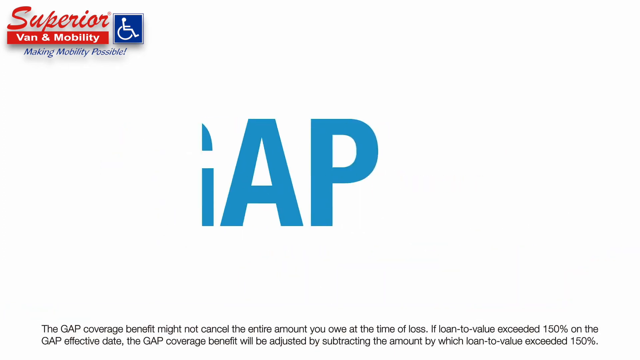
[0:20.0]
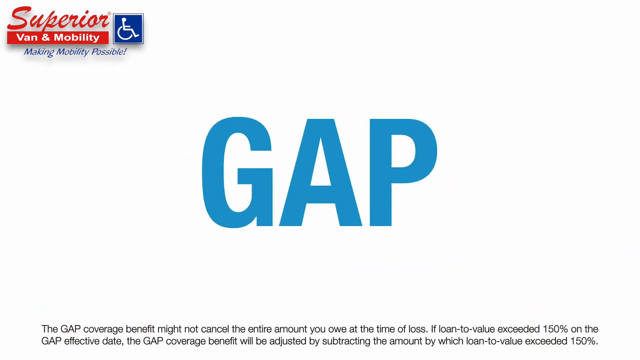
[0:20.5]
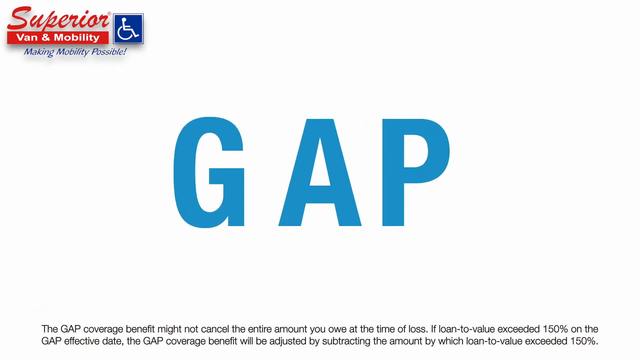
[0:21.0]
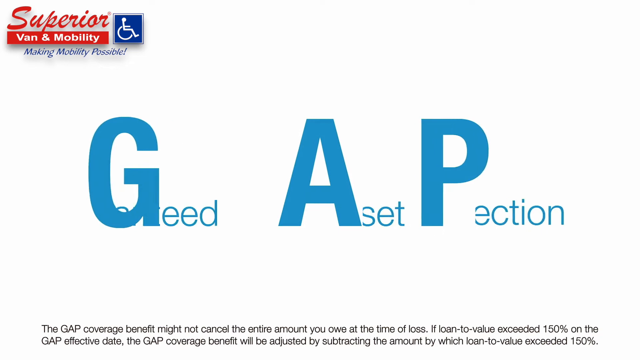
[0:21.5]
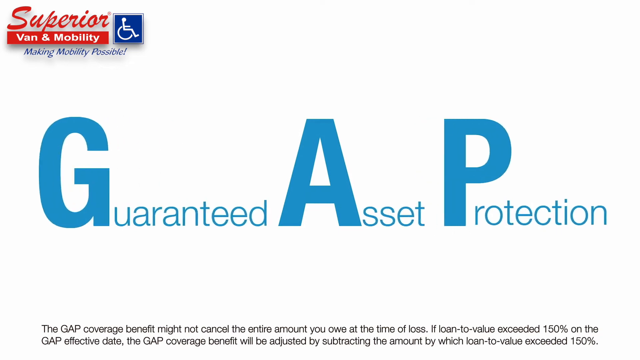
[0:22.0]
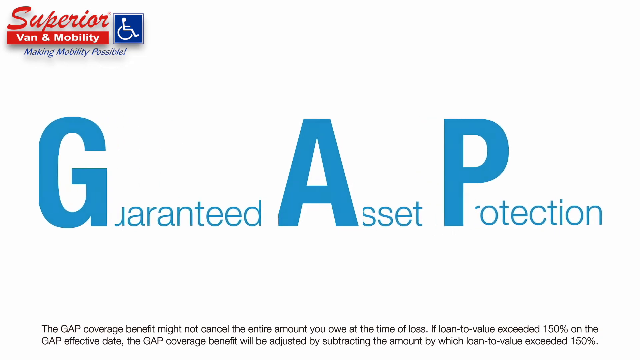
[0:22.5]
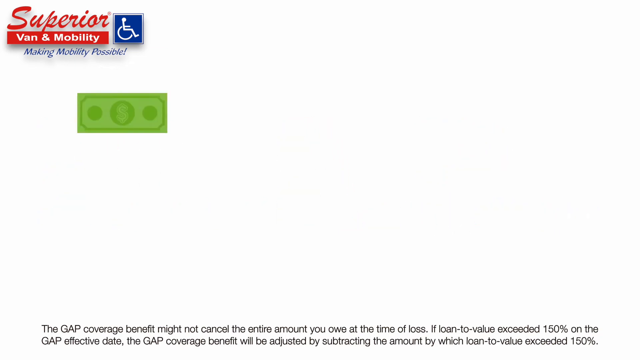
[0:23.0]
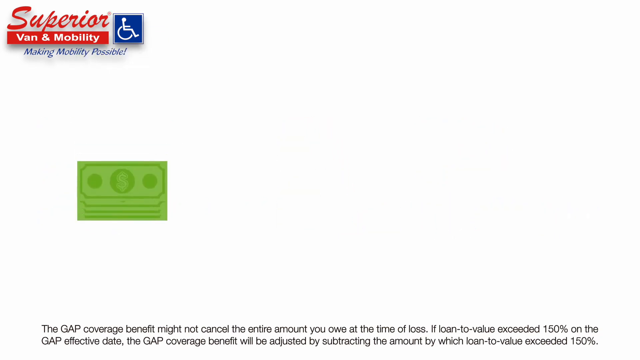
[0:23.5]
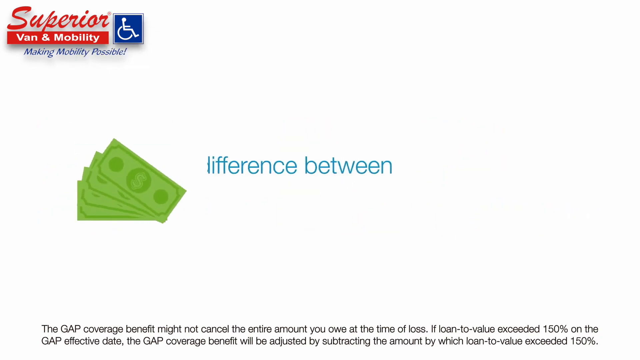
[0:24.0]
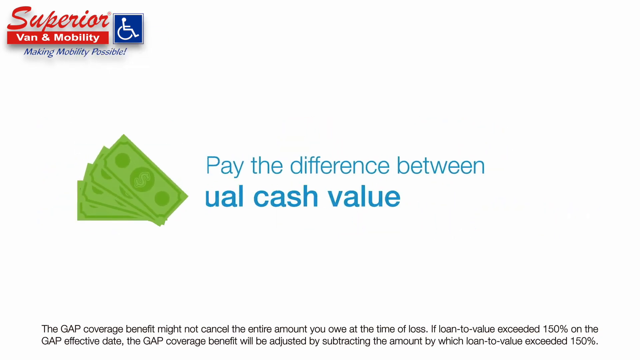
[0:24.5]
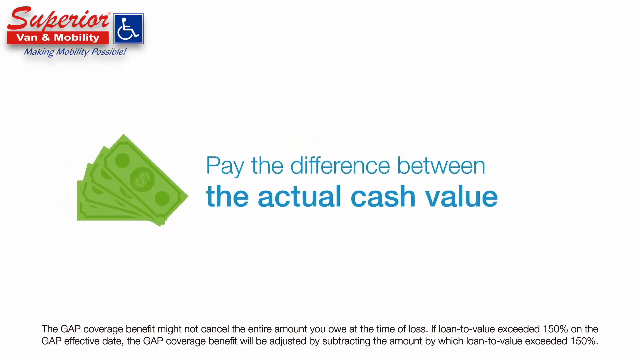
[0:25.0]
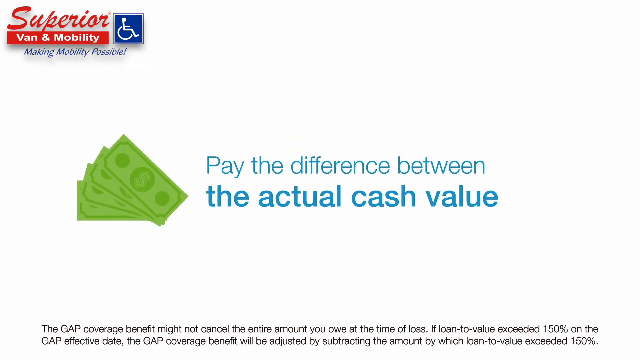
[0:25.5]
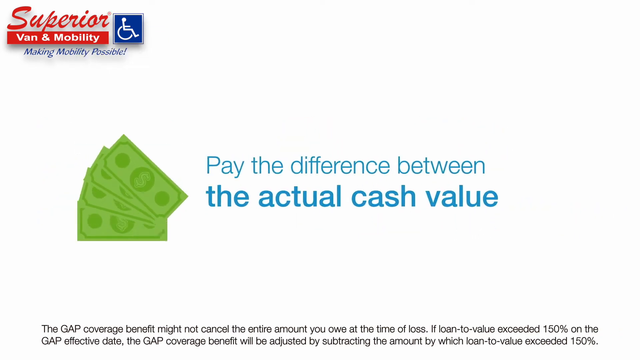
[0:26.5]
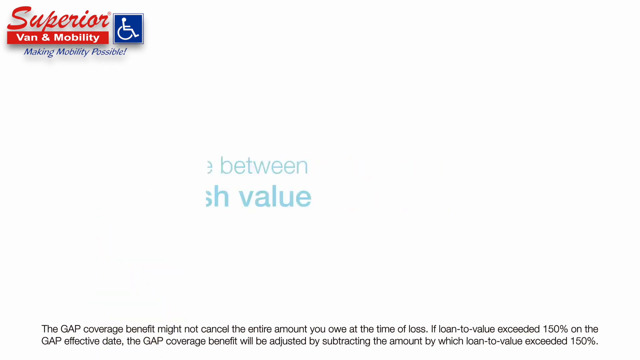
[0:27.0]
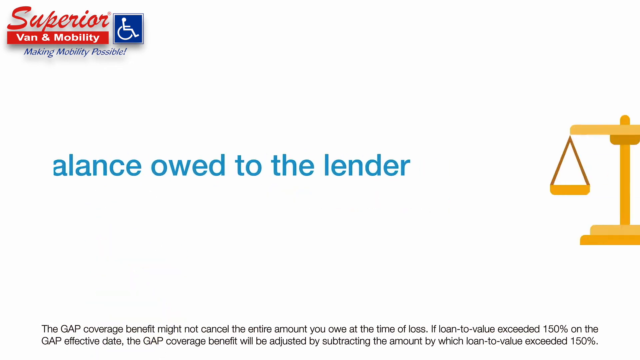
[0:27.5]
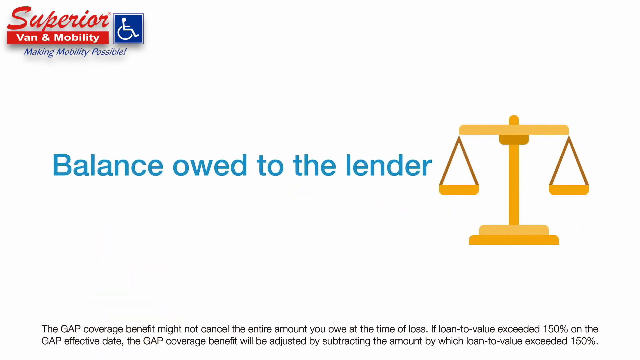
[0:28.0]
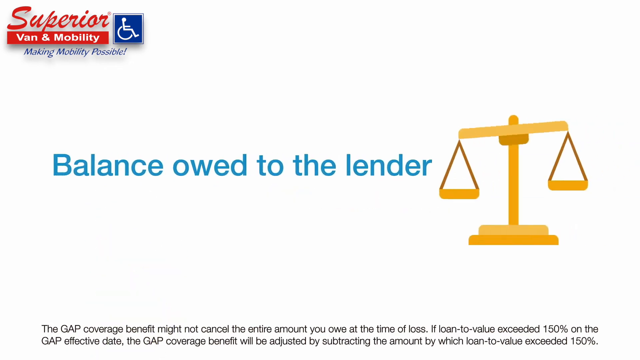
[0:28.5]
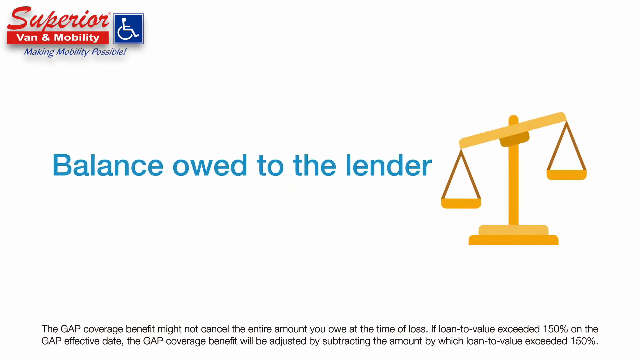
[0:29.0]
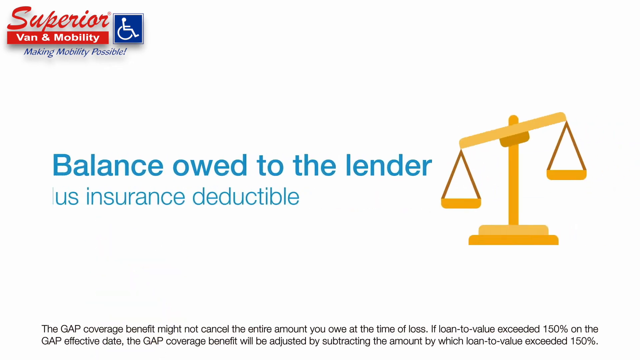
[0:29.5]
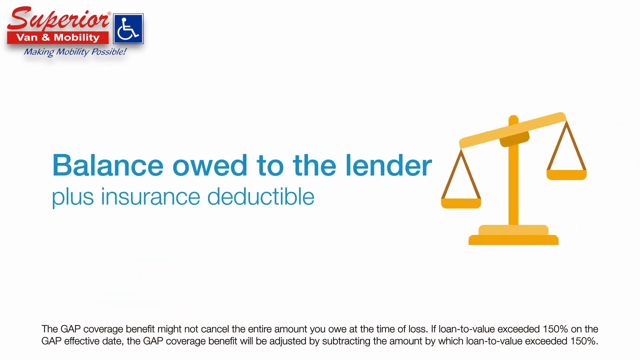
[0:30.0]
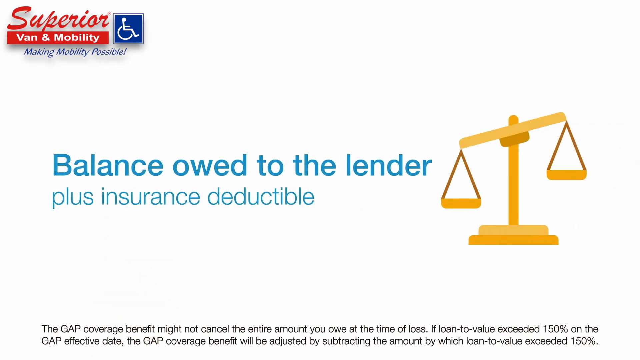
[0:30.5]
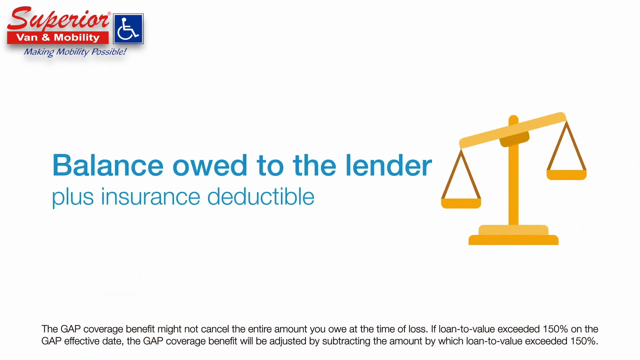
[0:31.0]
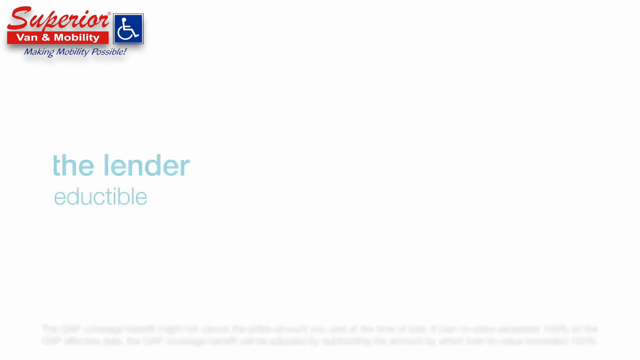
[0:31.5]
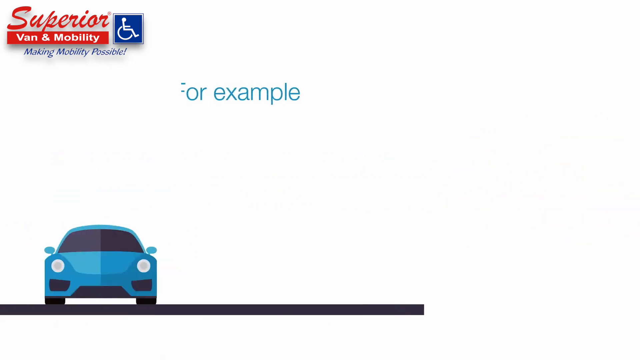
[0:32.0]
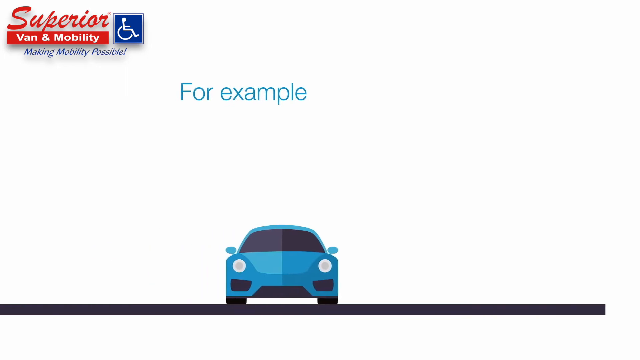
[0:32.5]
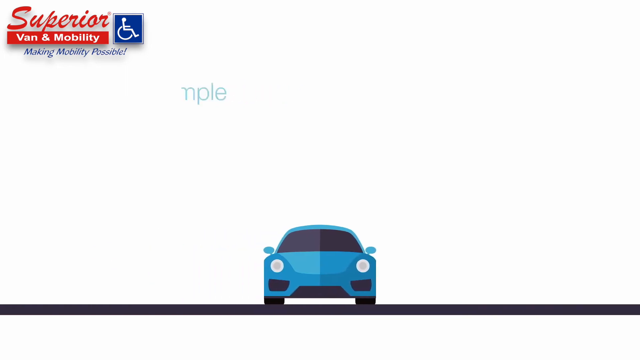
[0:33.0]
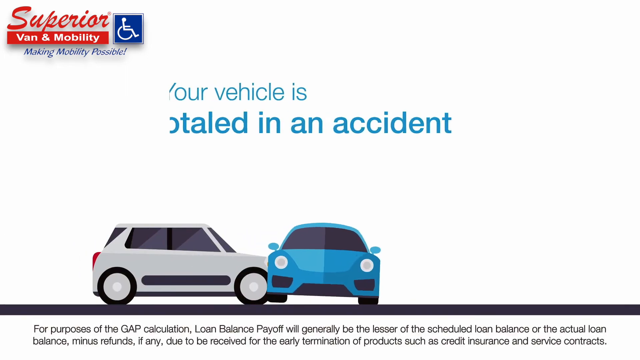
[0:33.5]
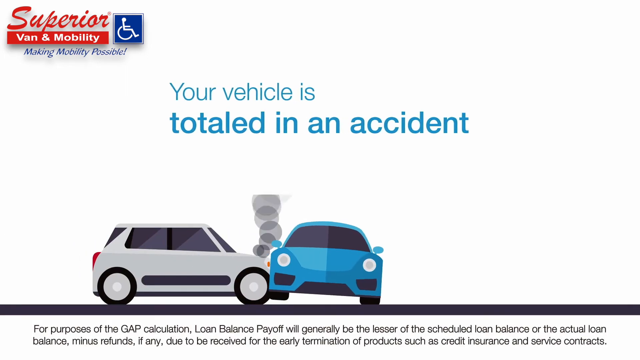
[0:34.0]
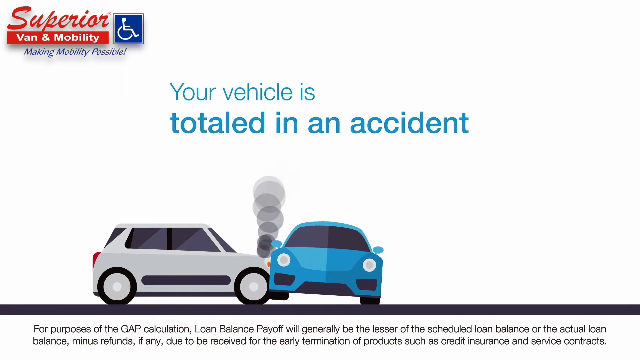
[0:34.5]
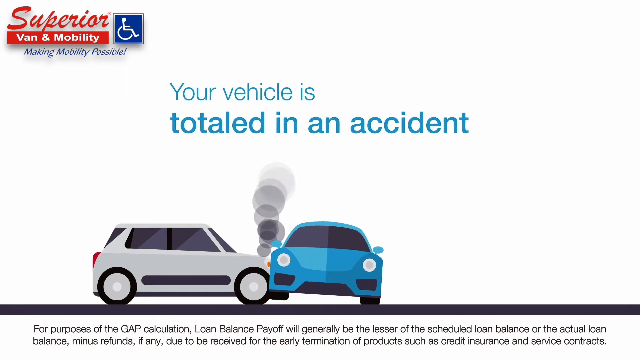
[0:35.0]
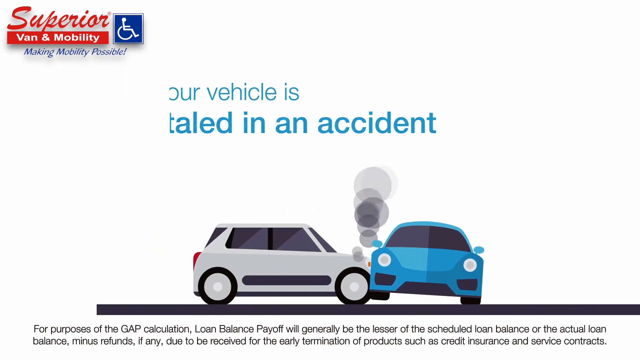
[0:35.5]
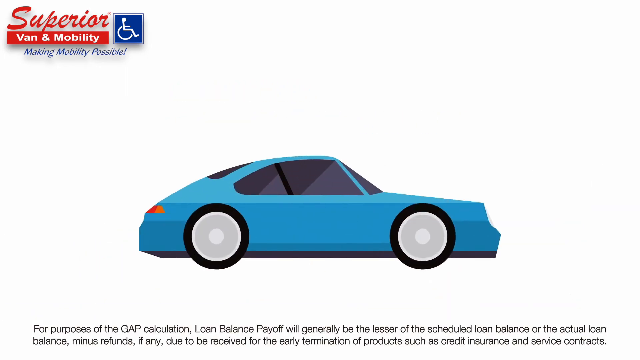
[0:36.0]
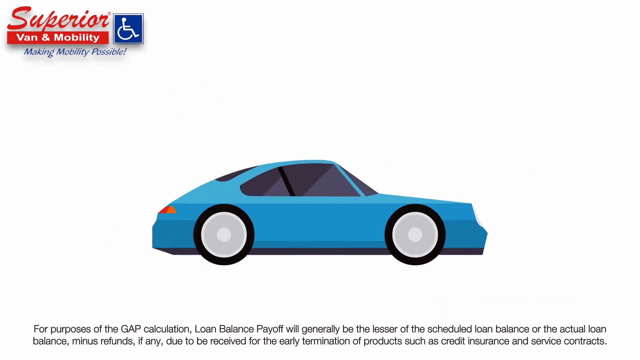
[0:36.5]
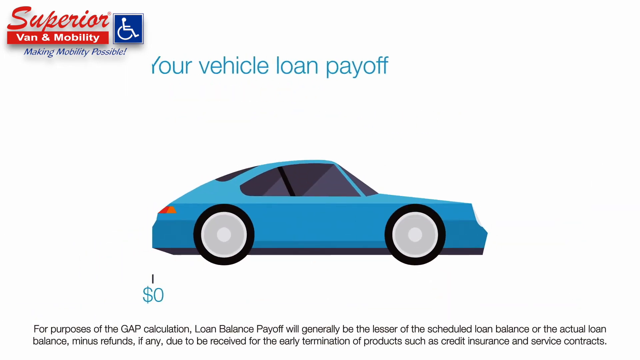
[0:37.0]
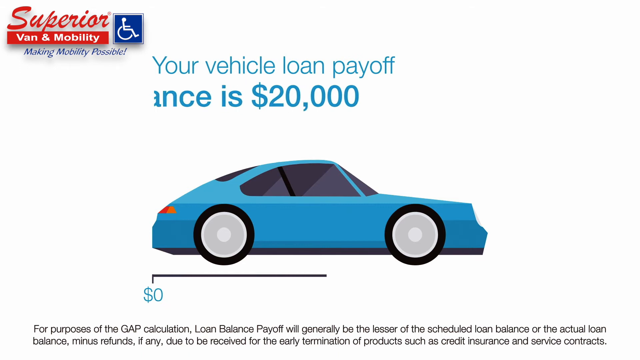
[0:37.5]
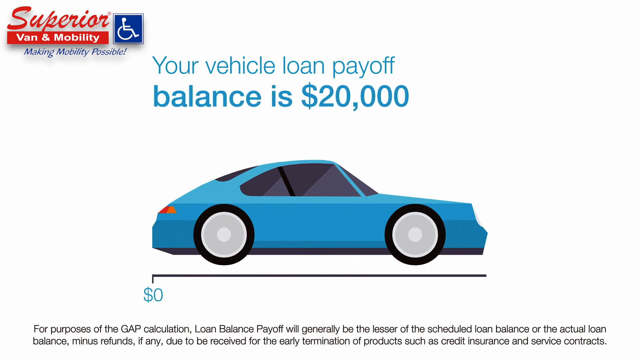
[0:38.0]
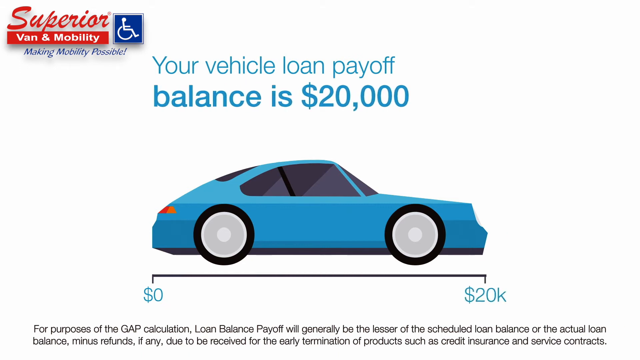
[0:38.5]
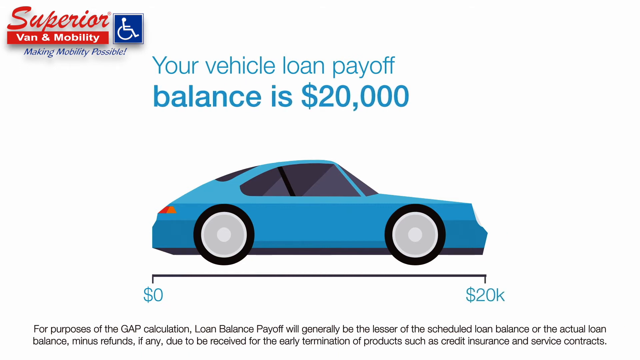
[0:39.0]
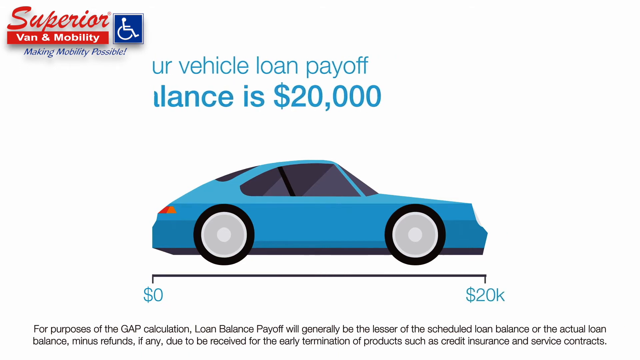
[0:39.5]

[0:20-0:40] Letters move to the left and right to form "guaranteed asset protection," and money appears on the left, tilting toward the center. Text reads "pay the difference between the actual cash value," with "balance owed to the lender" on the left, followed by a balance scale and "plus insurance deductible," as text comes in from the left and right. A blue car swipes in from the left into the middle, and a gray car comes in and hits the blue car at the center. At the top a blue tick appears with the text "your vehicle is totaled in an accident." Another blue car comes in, and the top reads "your vehicle loan payout balance is $20,000," with "$0" at the bottom and "$20,000" to the right. Overall, a car is shown.